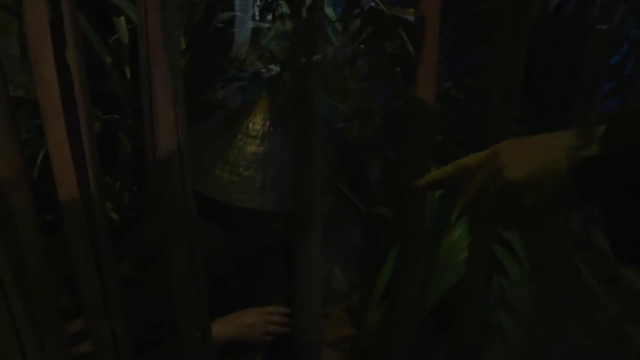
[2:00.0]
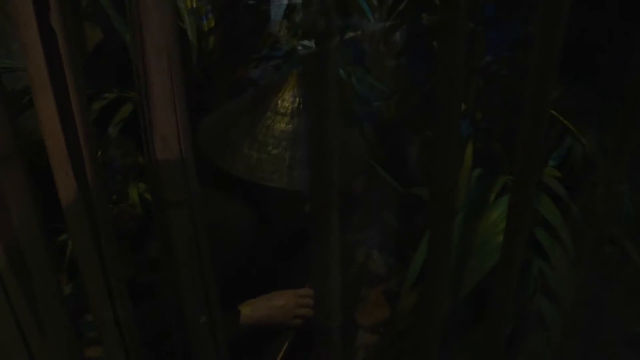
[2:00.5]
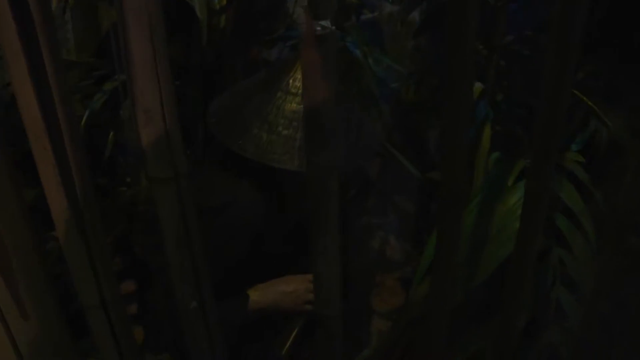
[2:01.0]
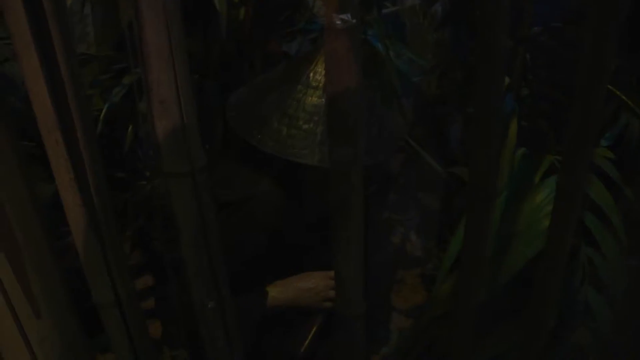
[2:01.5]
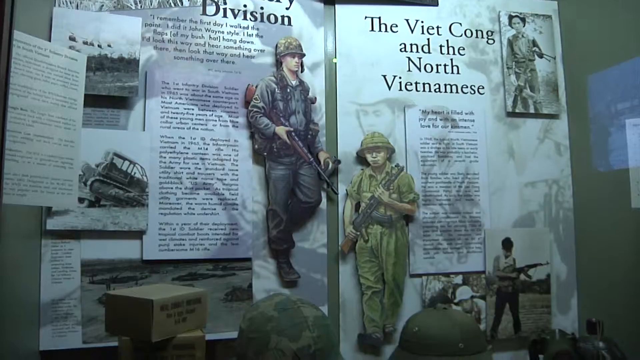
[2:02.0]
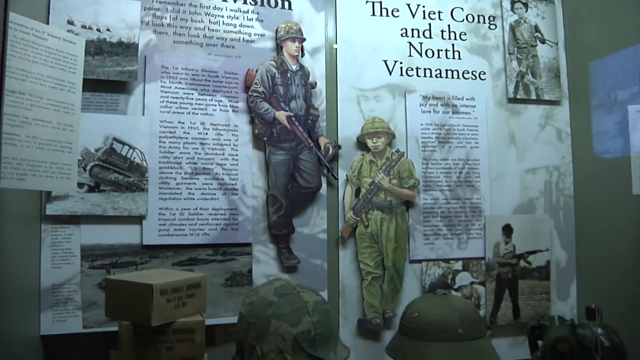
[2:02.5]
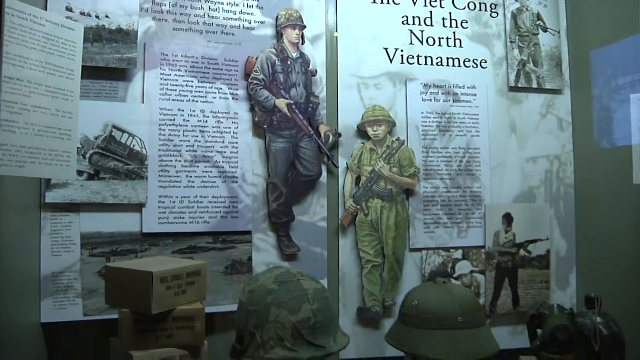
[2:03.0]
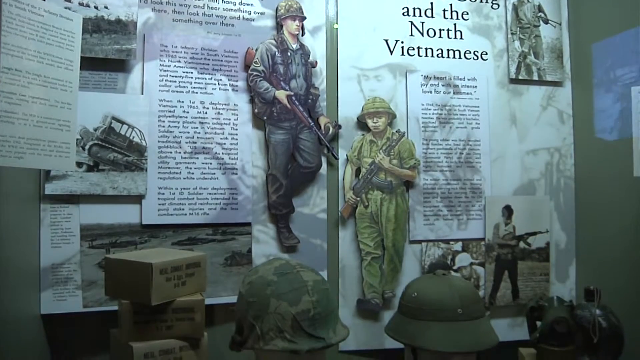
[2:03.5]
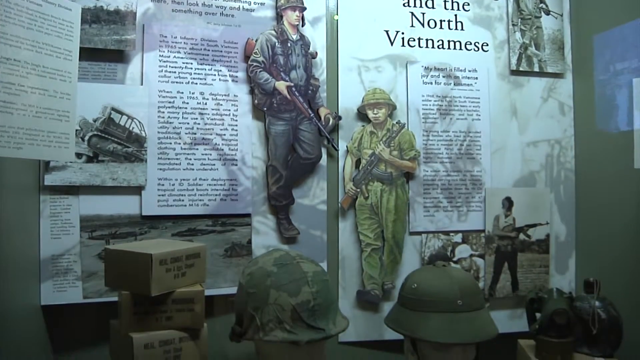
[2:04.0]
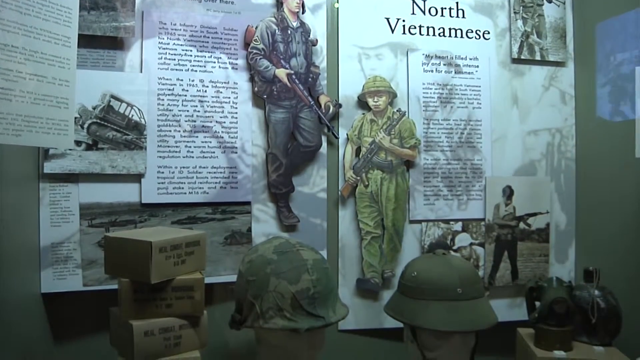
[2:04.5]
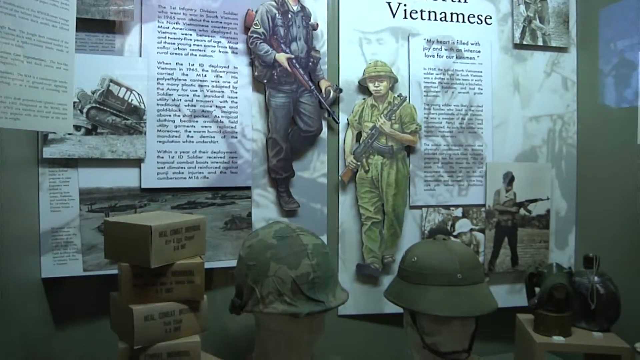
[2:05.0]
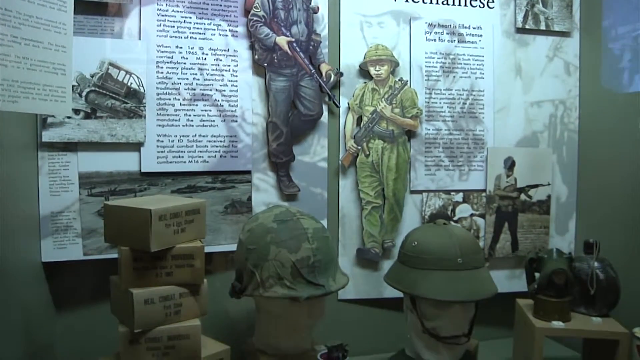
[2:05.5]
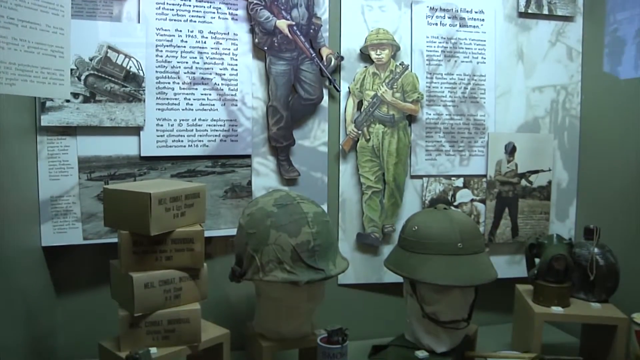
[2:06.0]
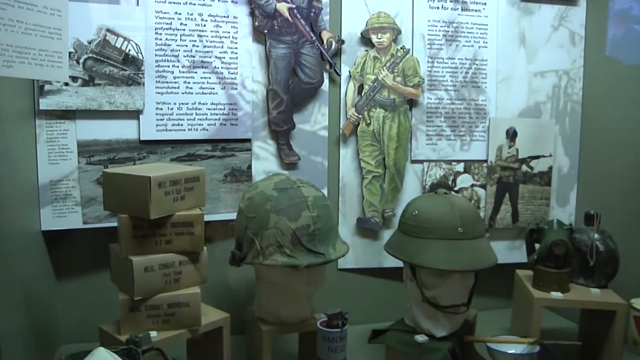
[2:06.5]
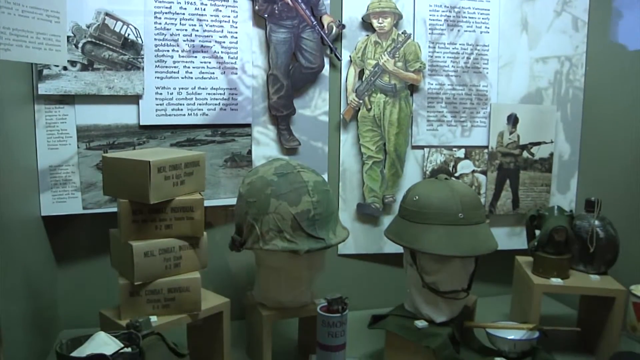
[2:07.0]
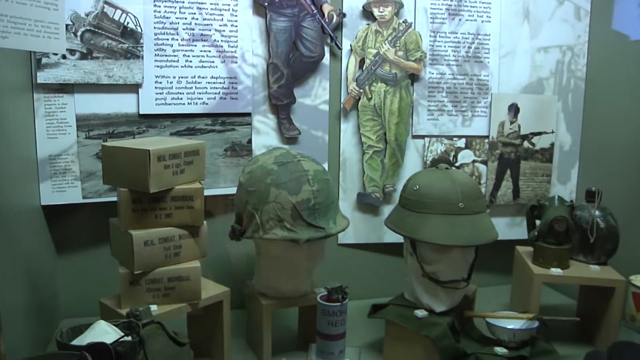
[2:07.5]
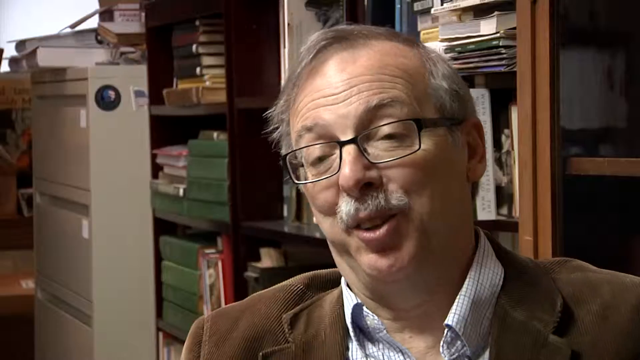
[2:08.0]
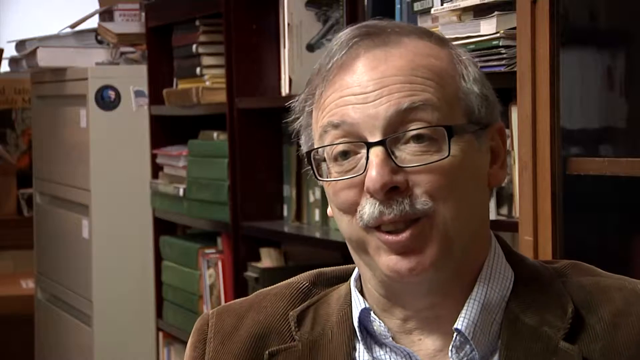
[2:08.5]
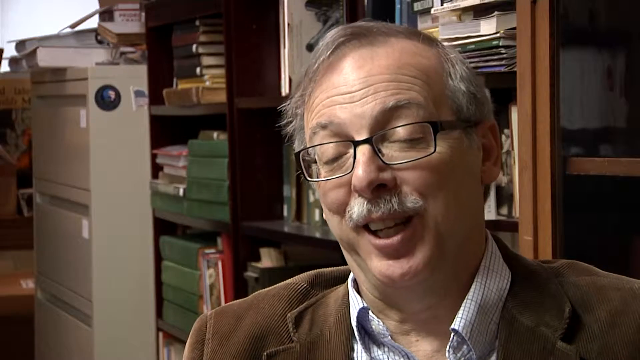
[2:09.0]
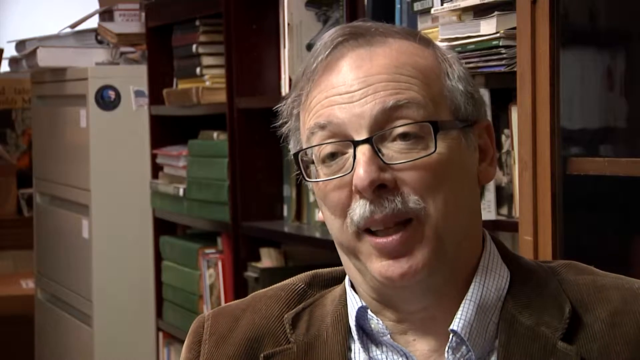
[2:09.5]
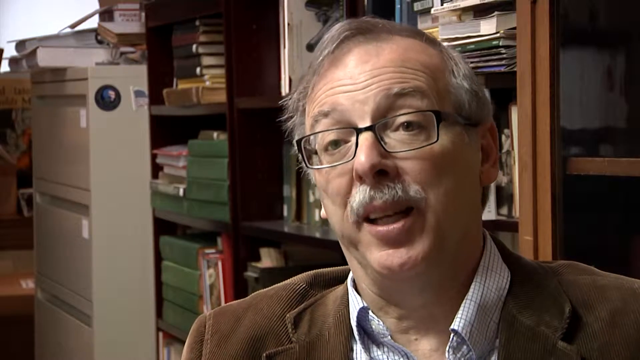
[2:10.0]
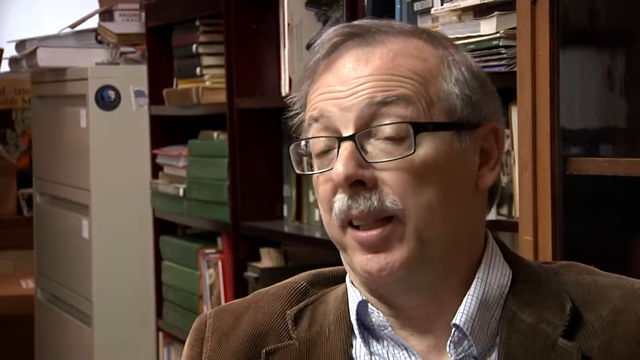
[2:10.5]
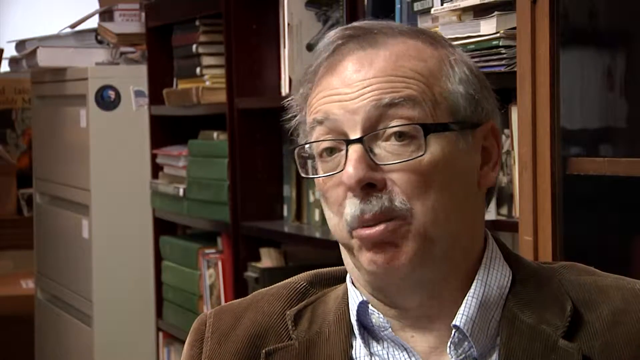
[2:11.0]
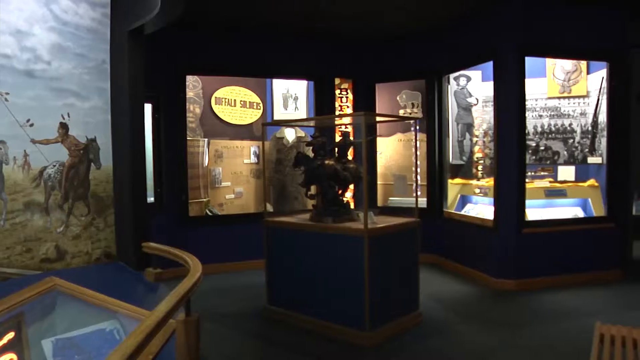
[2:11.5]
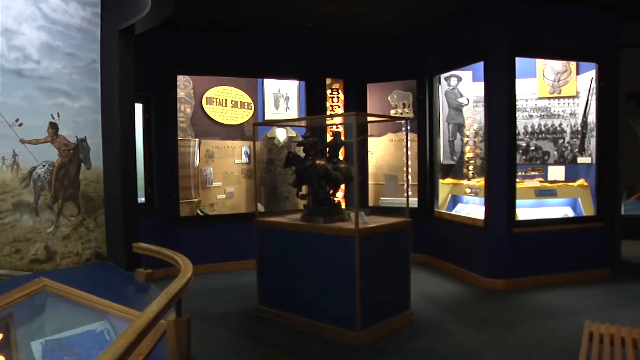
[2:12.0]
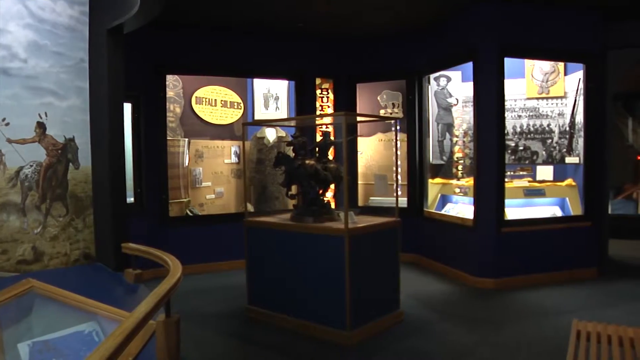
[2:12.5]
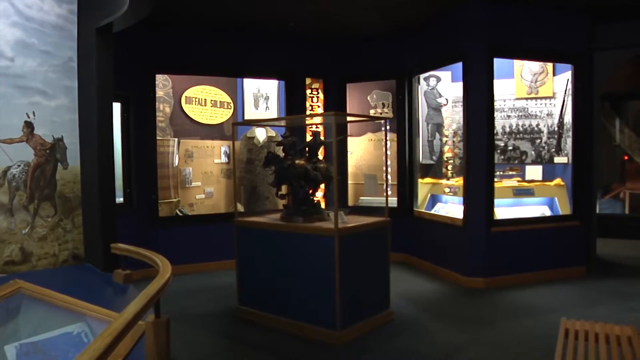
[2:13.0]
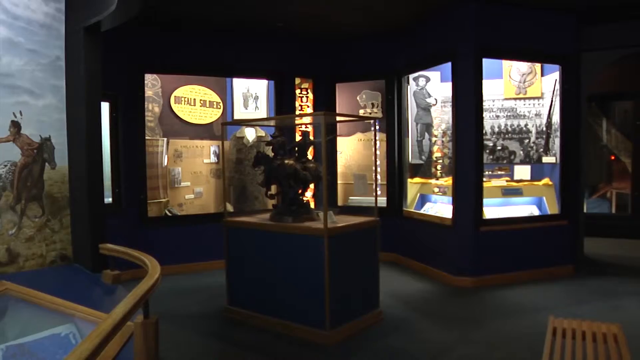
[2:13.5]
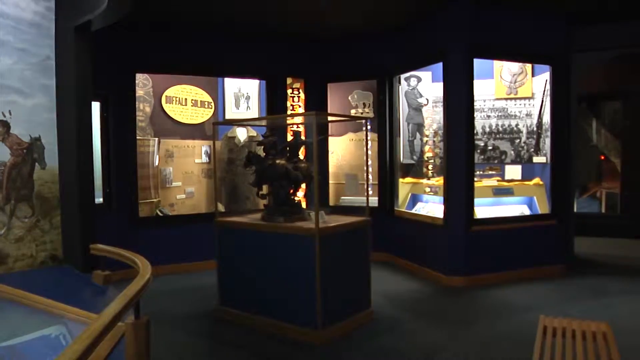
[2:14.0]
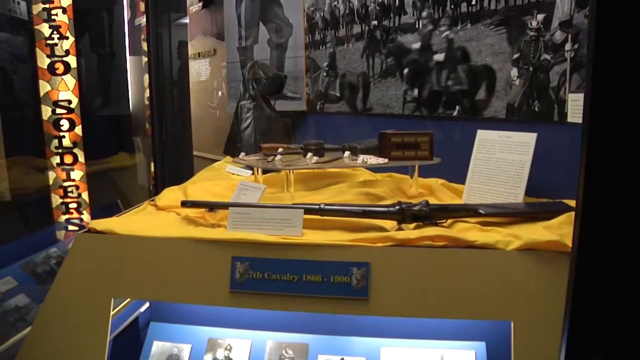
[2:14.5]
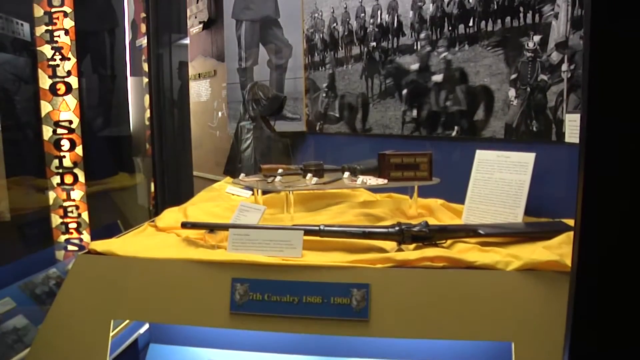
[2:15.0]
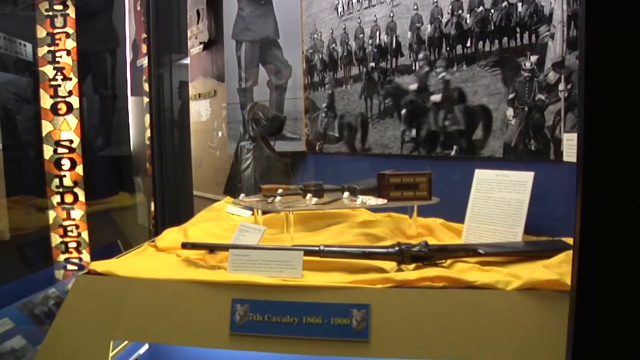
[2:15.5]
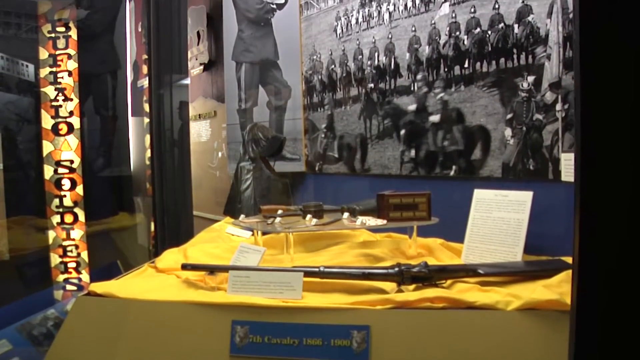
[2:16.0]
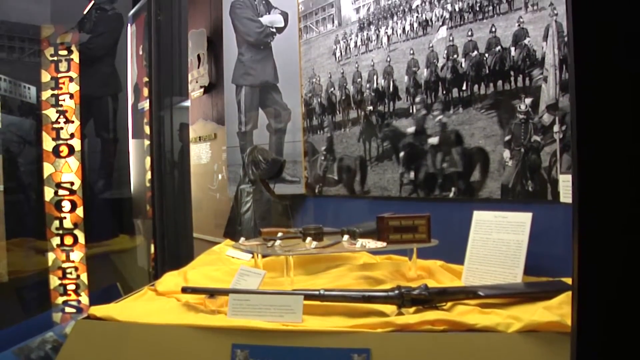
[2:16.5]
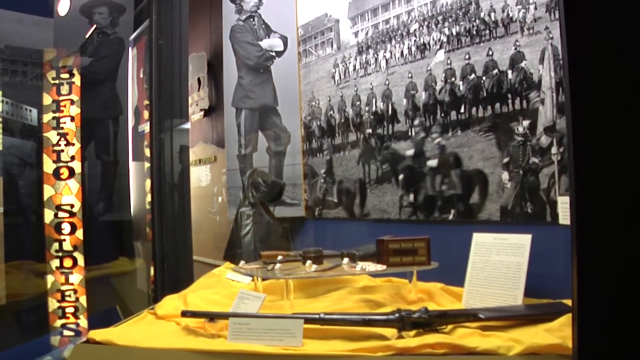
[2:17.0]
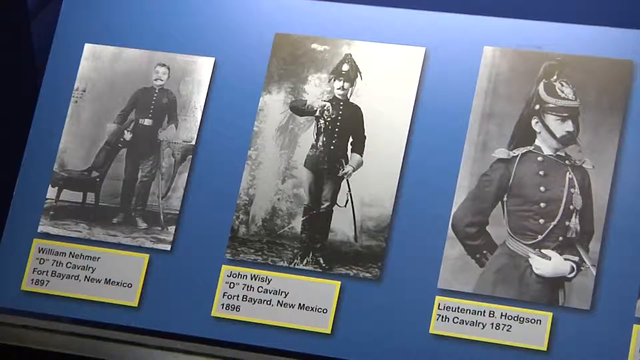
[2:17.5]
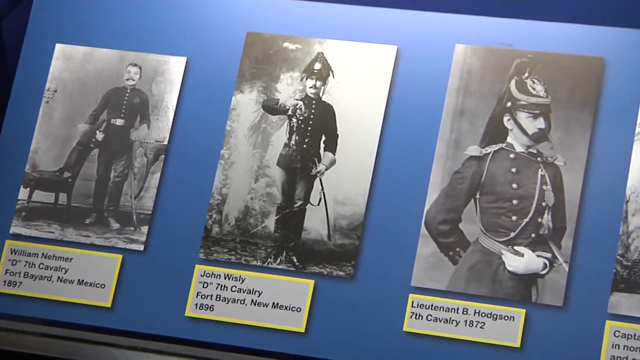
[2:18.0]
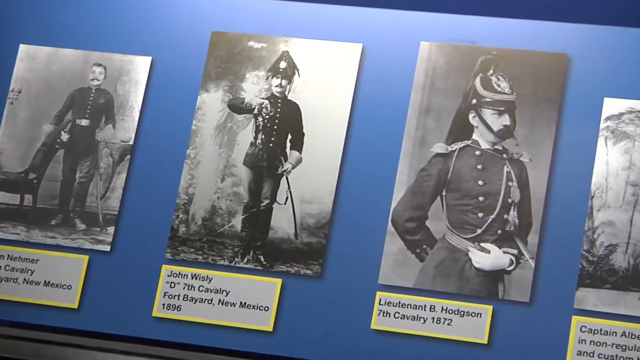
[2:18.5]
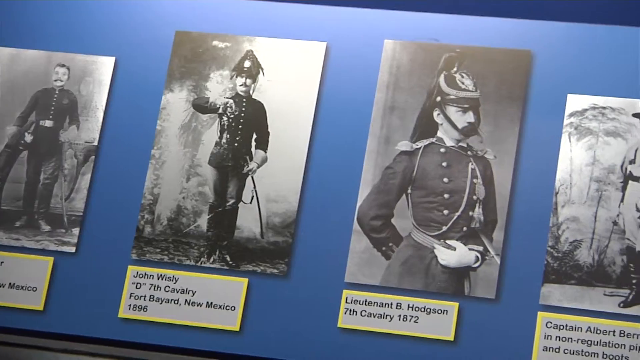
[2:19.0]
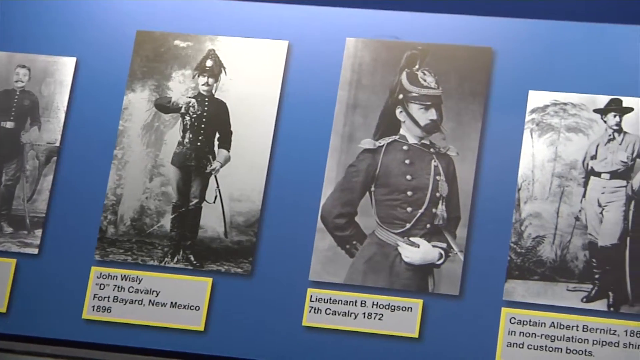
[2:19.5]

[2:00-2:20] The Vietnam War section of the museum has a pretend Vietnamese jungle, with "the North Vietnamese" on the wall and pictures of some of their soldiers; on the left is a picture of a GI, along with some military helmets. The historian giving the tour talks; he is an elderly, bald man in a brown corduroy jacket and black-framed glasses shaped like horizontal rectangles. He is then in the main part of the museum, where a case says "Buffalo Soldiers." To the left is a mural with a Plains Indian, and to the very right is a man in a costume that could be from after the Civil War. The camera pans around, and the figure turns out to be Custer.